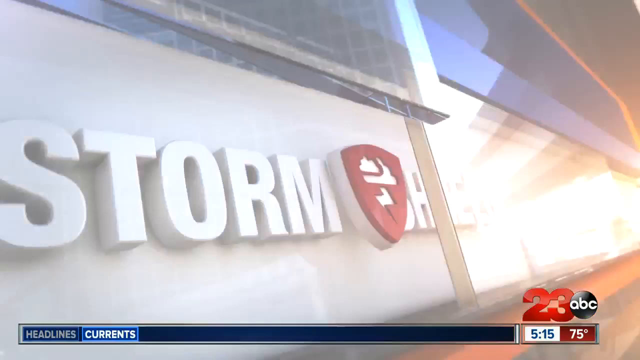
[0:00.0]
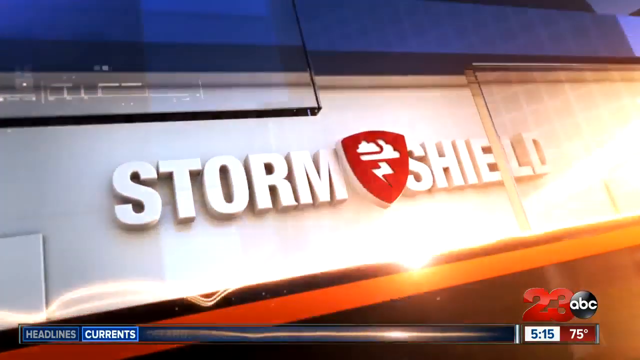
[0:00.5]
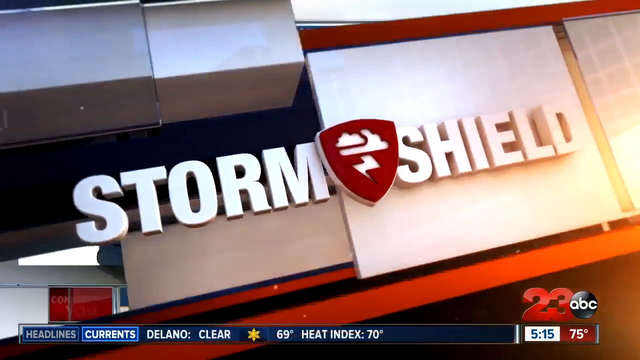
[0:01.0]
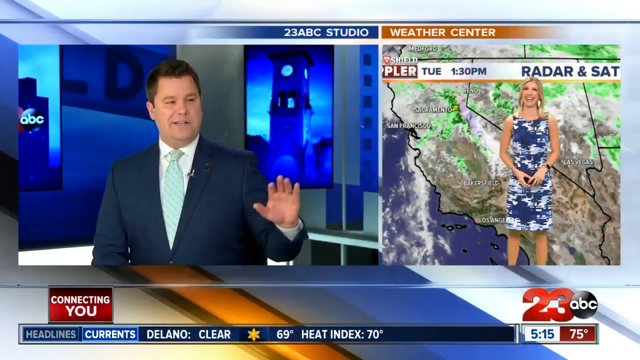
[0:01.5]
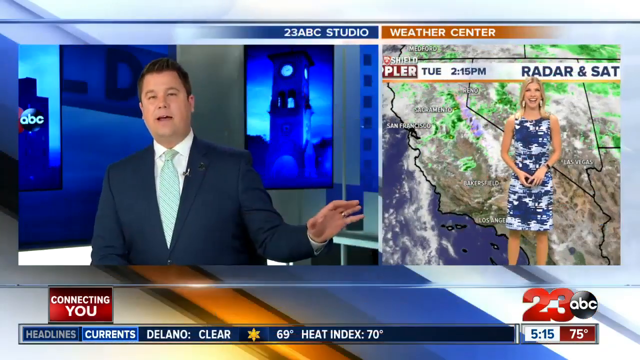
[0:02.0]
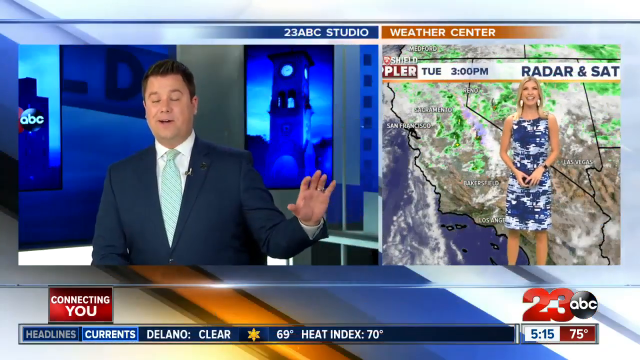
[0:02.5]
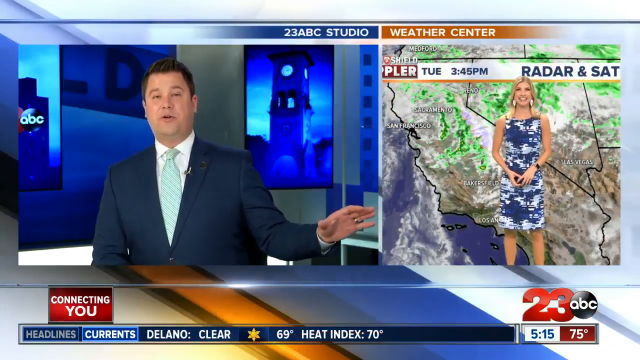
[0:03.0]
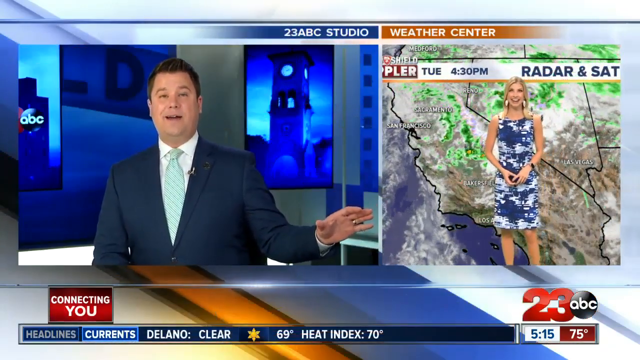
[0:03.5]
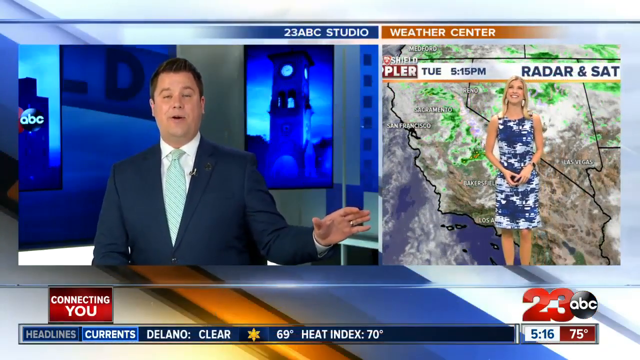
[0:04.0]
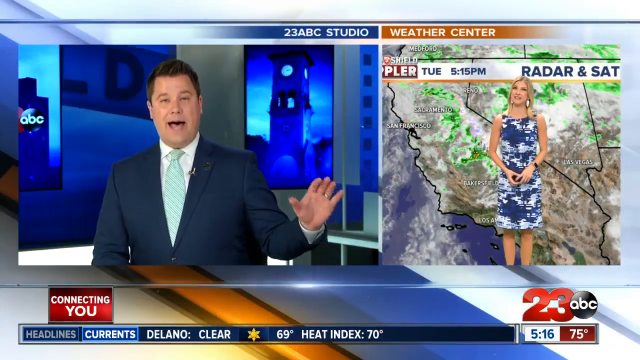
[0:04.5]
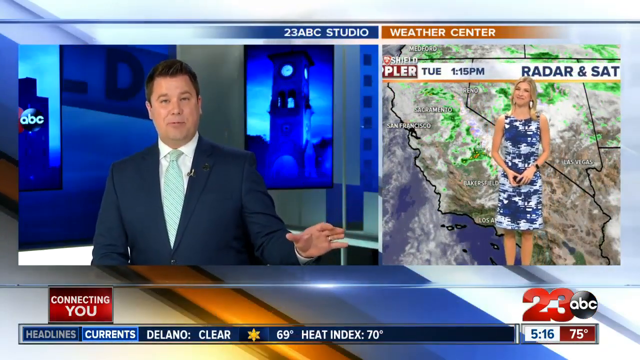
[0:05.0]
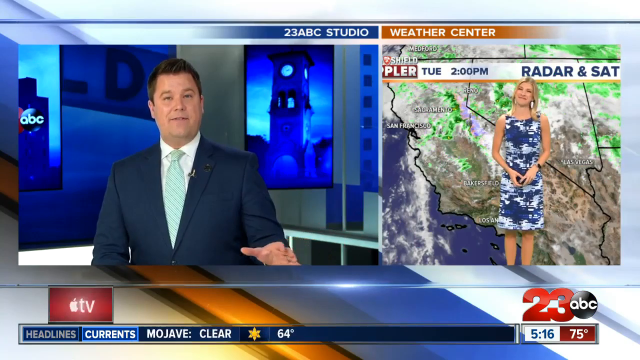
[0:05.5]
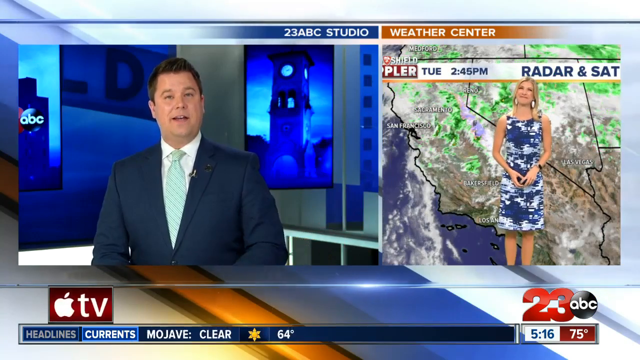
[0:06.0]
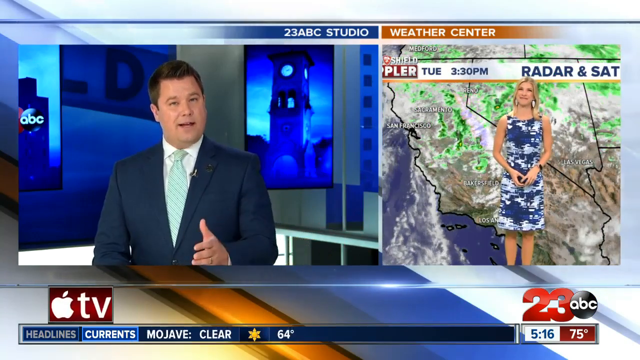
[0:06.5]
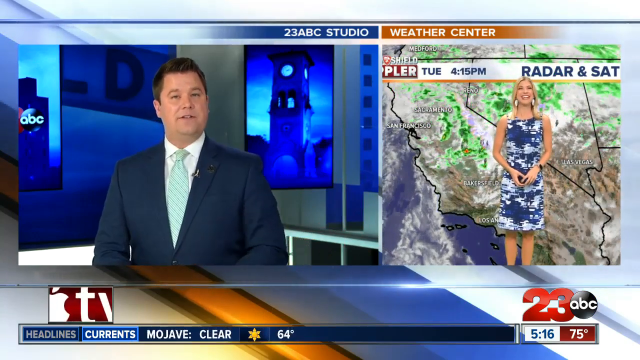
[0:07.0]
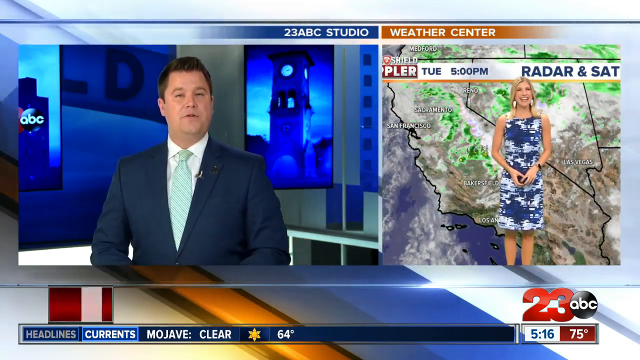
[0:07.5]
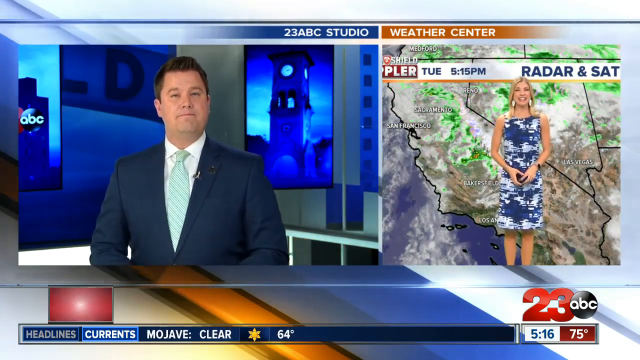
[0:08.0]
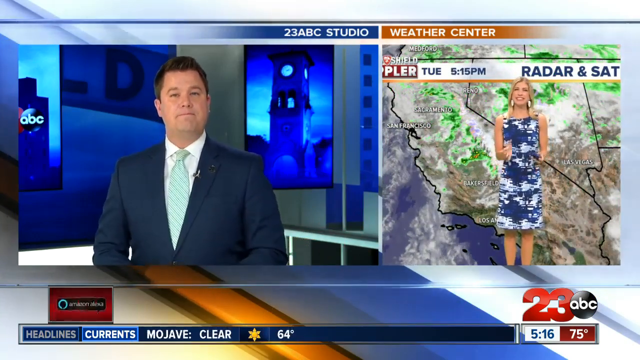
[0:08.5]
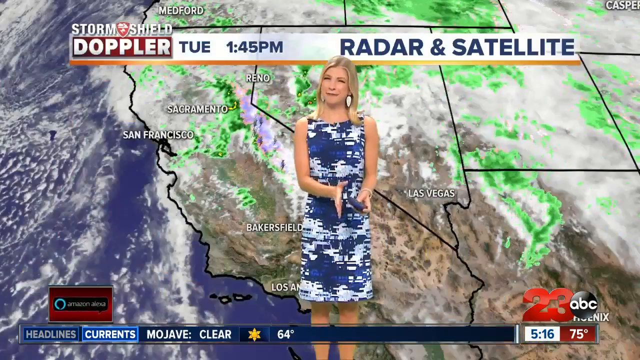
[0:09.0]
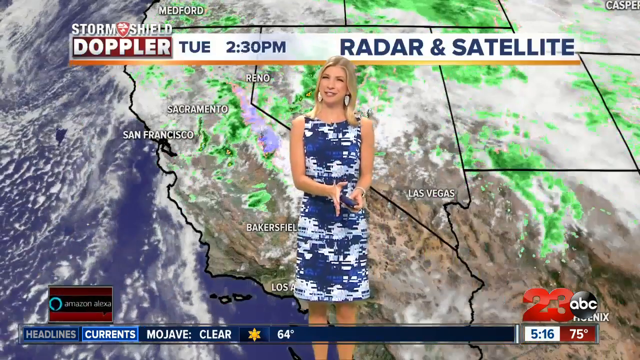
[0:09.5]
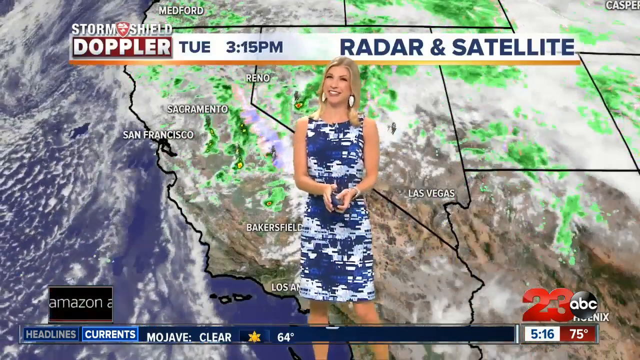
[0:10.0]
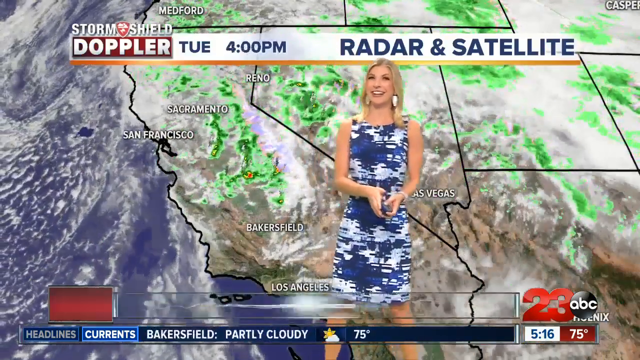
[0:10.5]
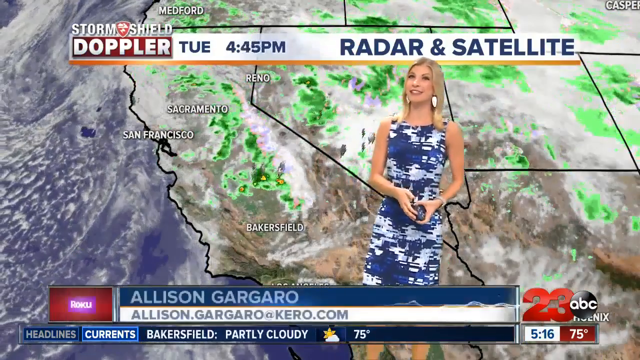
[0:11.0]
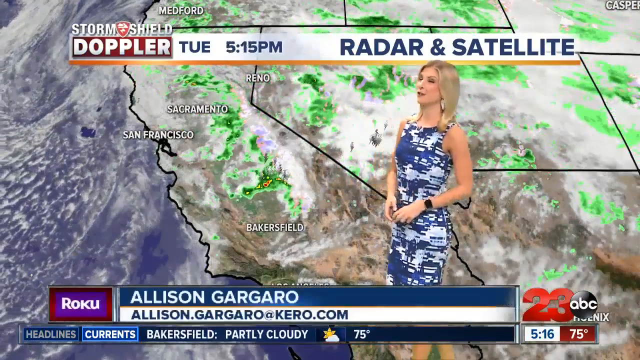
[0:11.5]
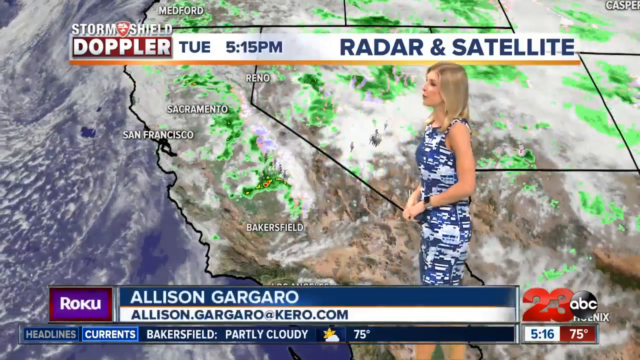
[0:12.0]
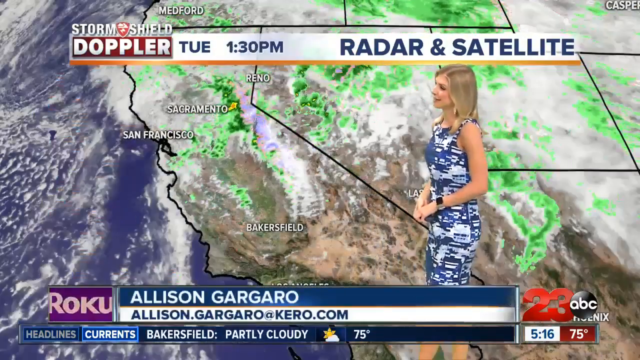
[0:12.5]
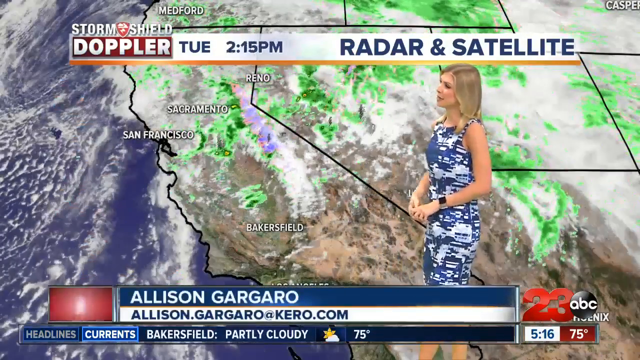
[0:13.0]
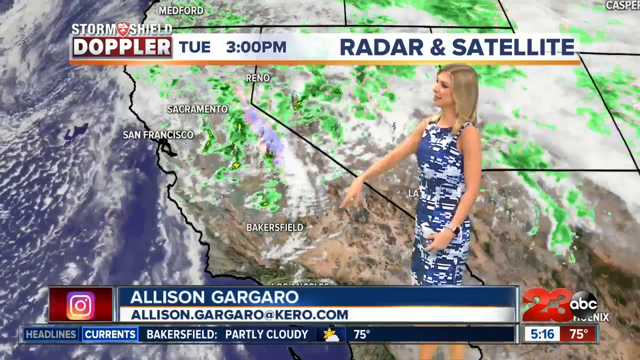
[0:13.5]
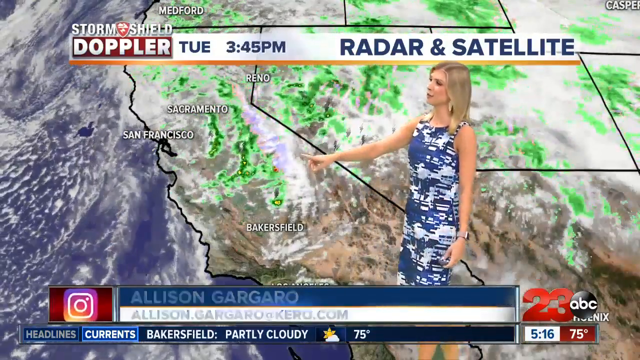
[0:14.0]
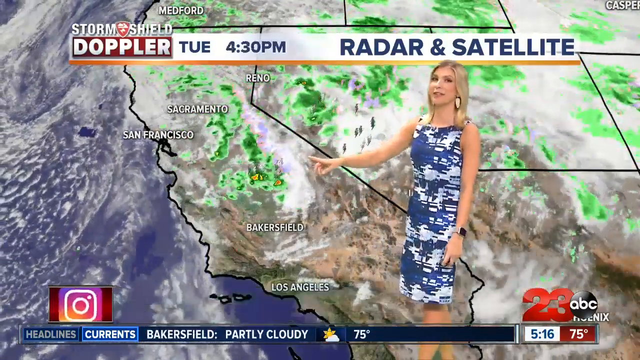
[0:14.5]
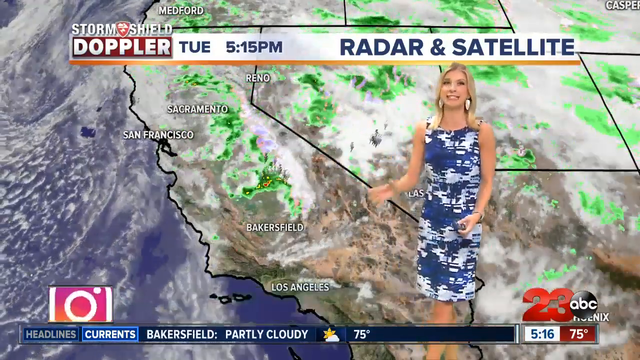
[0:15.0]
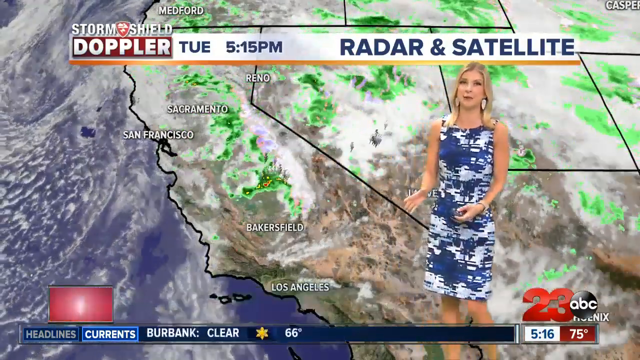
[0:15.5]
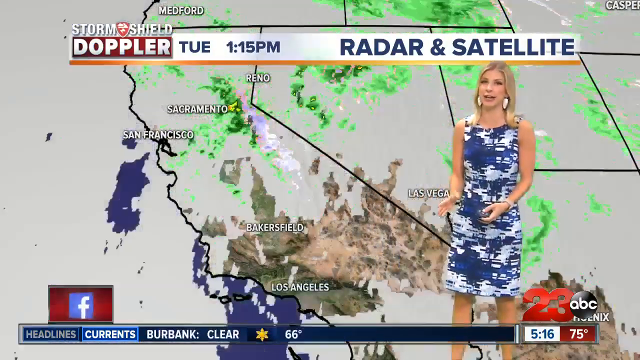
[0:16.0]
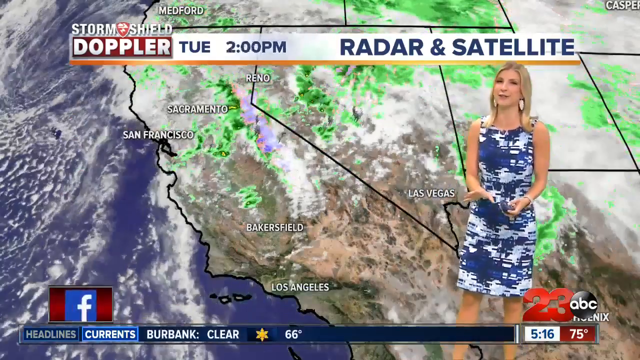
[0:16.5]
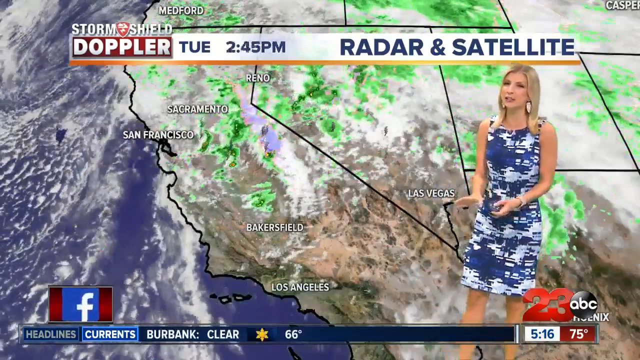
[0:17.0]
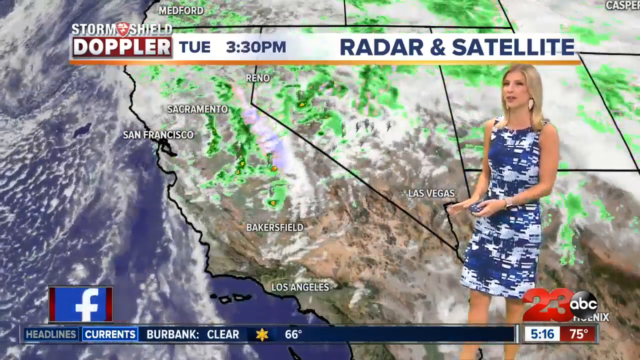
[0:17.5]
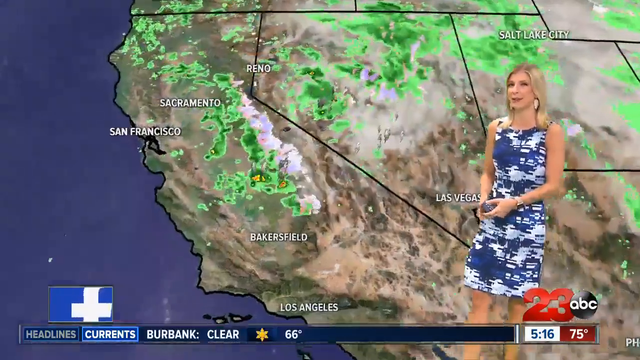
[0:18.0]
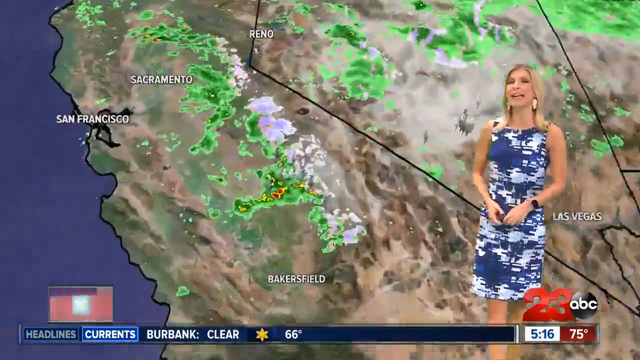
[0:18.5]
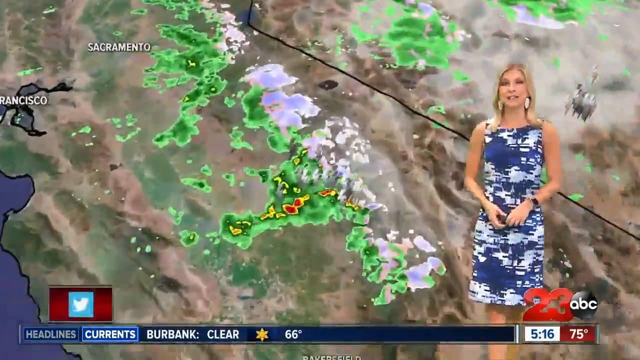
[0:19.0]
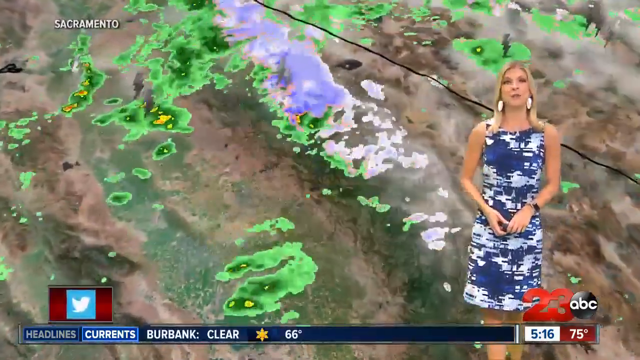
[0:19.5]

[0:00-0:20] What looks like a news channel broadcast opens with a "storm shield" logo popping up. The screen then splits between two news anchors. One, a man in a blue suit with a turquoise tie, is in a news studio, with "23 ABC studio" written at the top. The other side shows a green screen displaying the weather of an area around California, with a woman with blonde hair in a dress standing in front of it. On-screen text indicates the weather center and Tuesday, around 2 to 5 p.m. The view then shows only the weather station, apparently focusing on California, with the text "storm shield Doppler radar and satellite." The woman turns somewhat to the side and appears to point to an area between San Francisco and Bakersfield, and then the view zooms in to show what look like storm clouds.